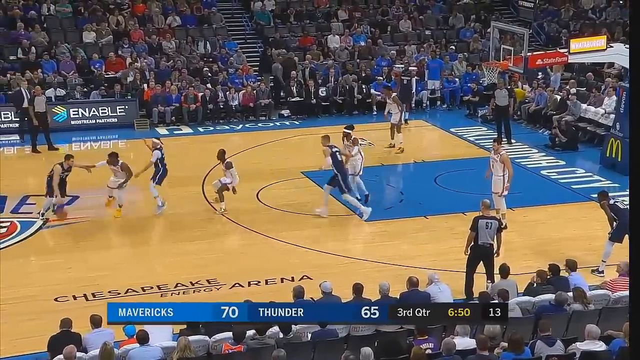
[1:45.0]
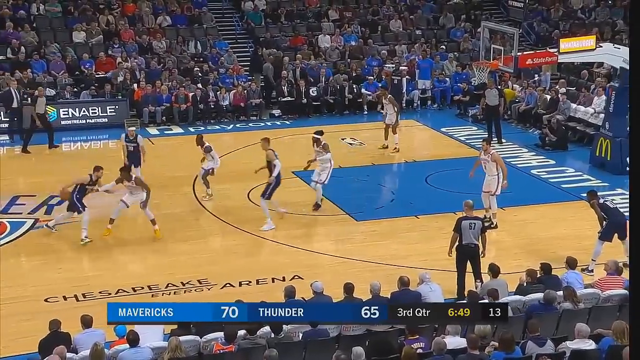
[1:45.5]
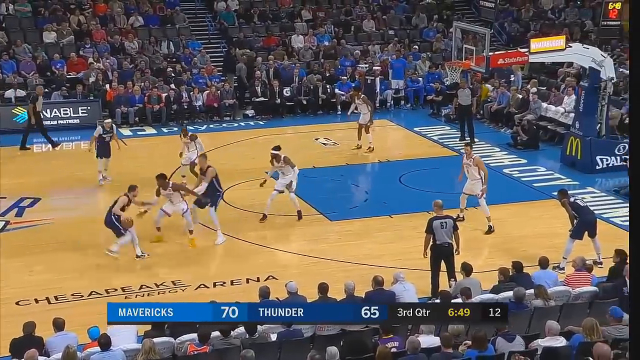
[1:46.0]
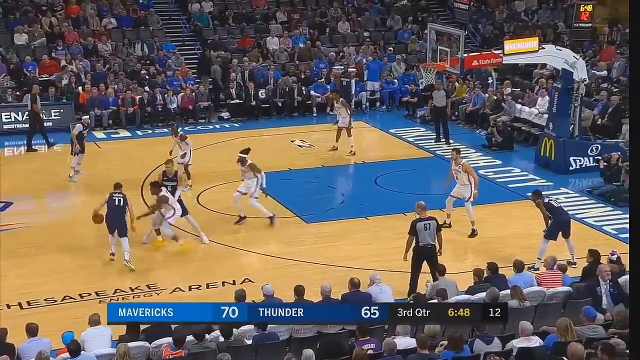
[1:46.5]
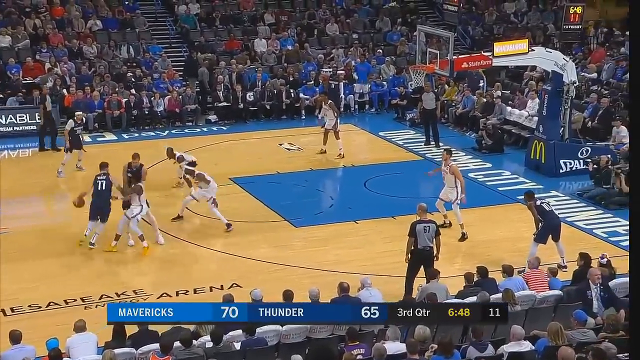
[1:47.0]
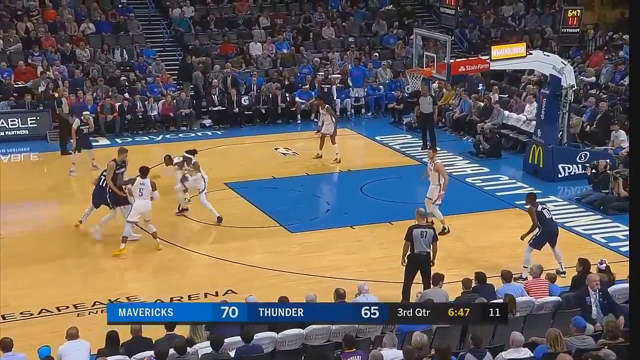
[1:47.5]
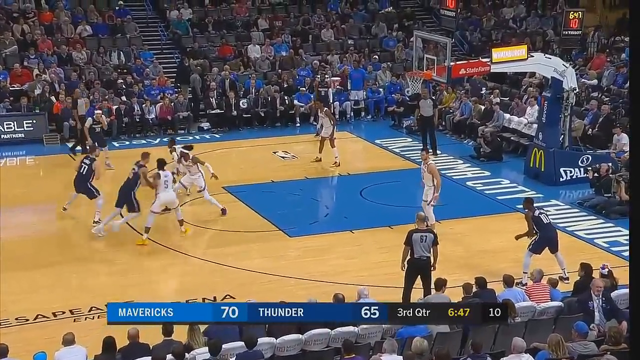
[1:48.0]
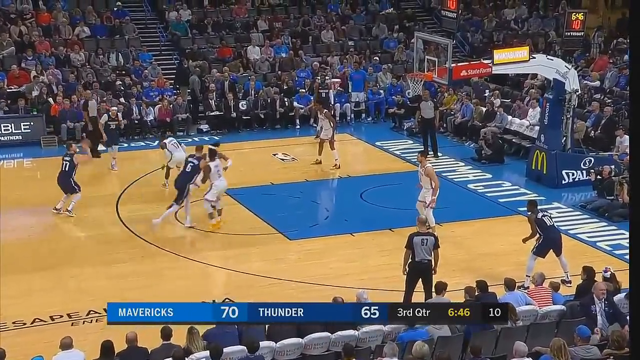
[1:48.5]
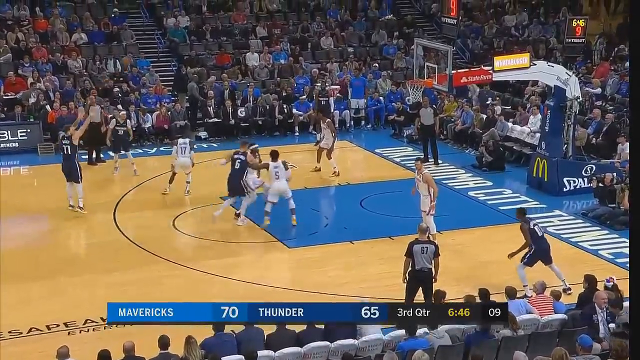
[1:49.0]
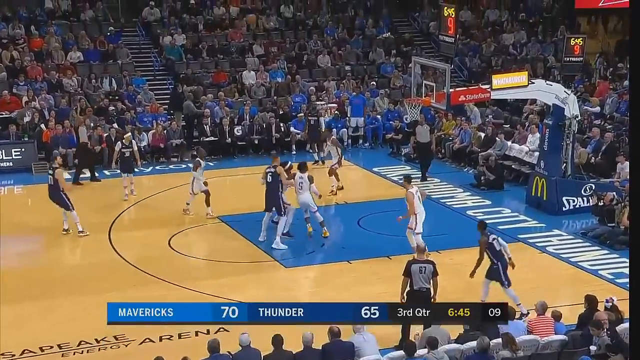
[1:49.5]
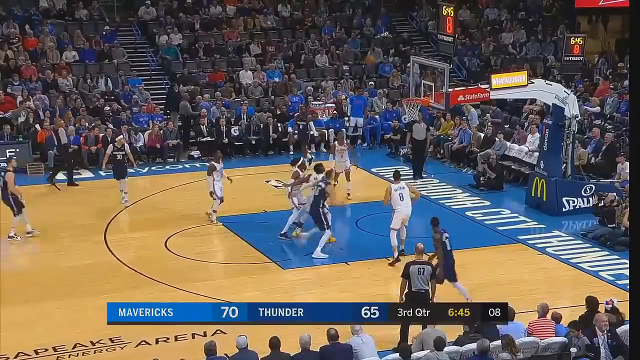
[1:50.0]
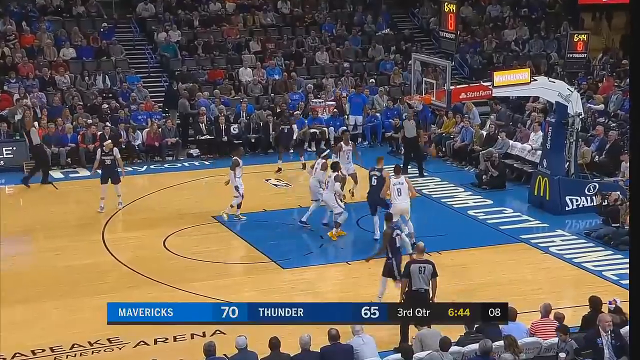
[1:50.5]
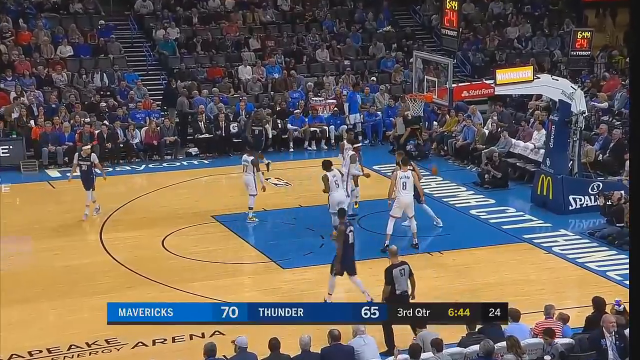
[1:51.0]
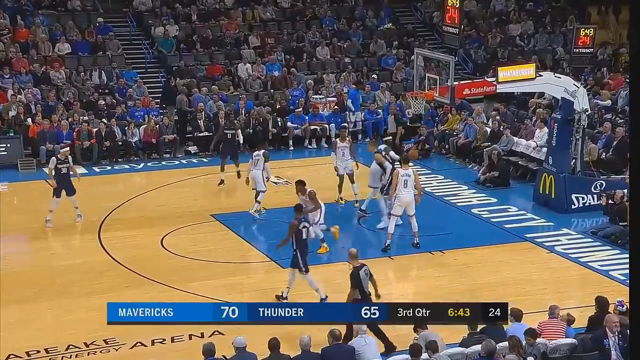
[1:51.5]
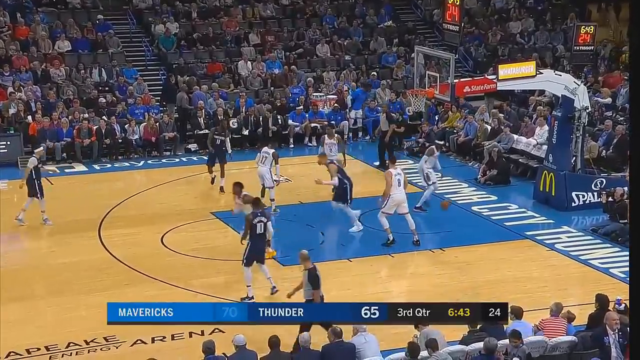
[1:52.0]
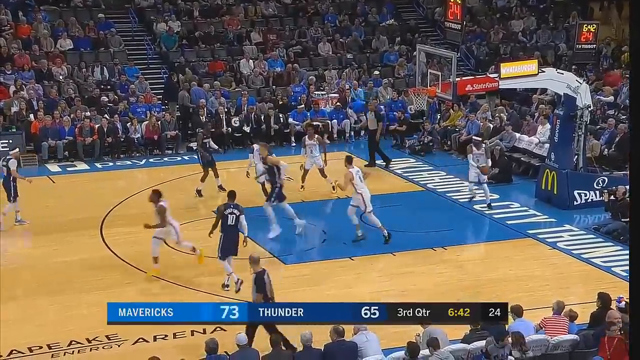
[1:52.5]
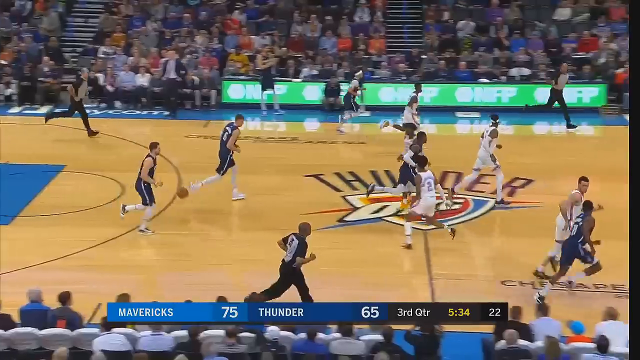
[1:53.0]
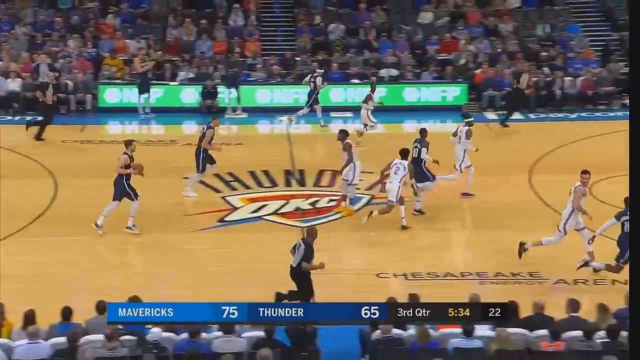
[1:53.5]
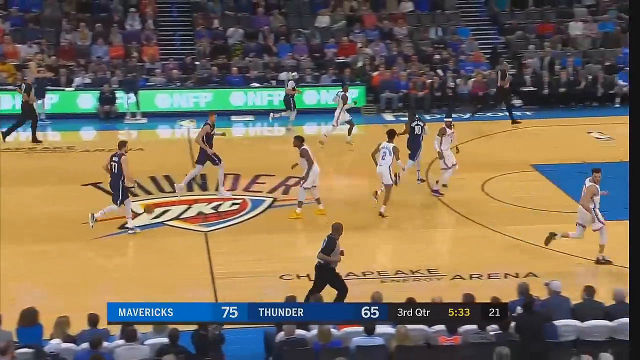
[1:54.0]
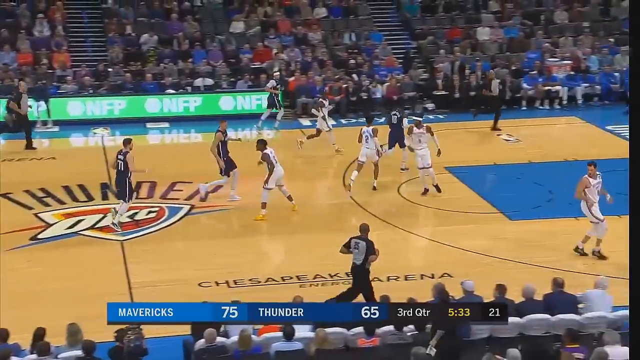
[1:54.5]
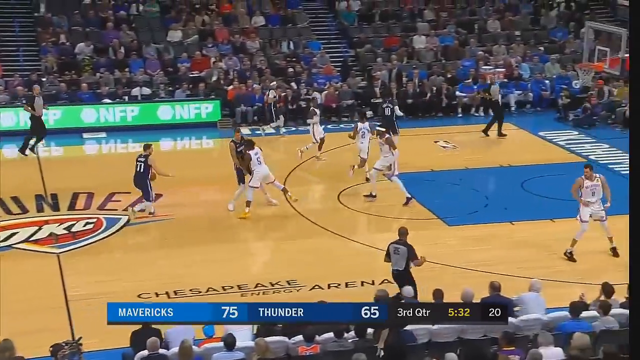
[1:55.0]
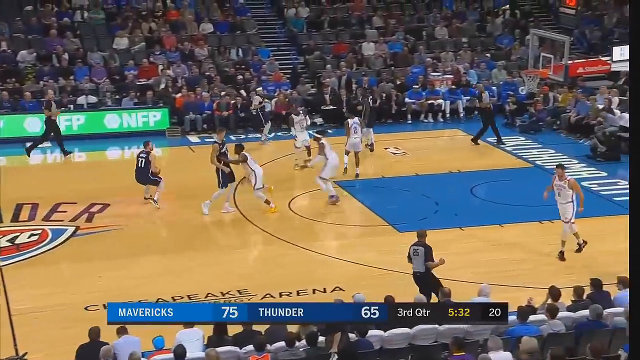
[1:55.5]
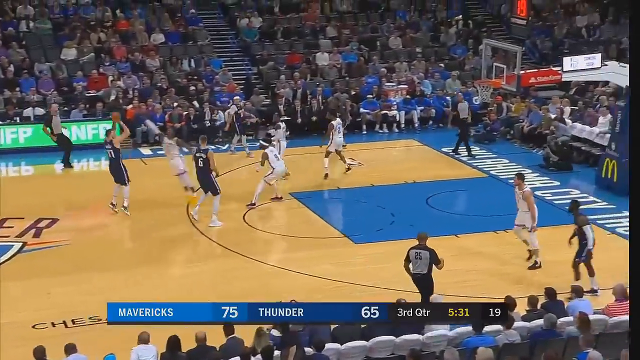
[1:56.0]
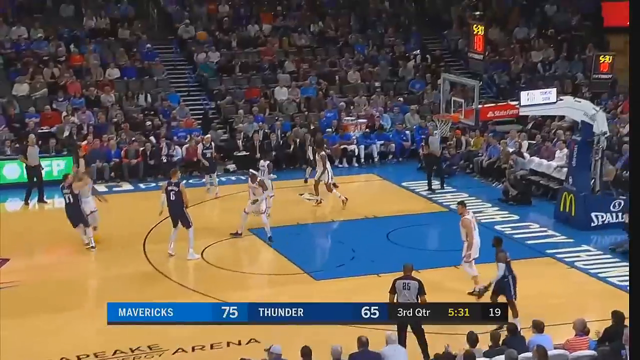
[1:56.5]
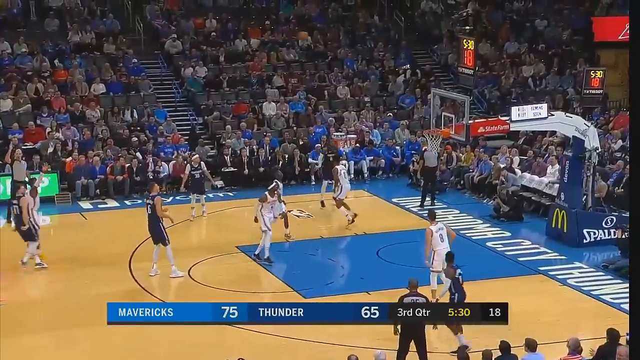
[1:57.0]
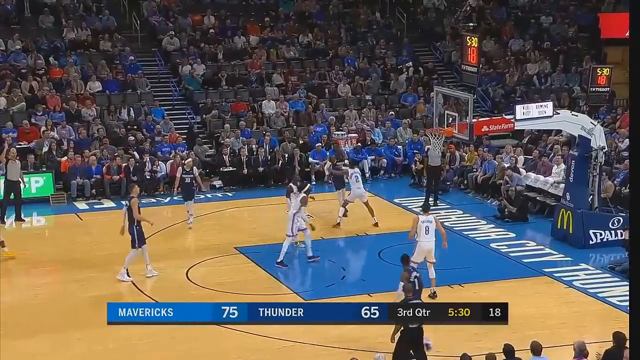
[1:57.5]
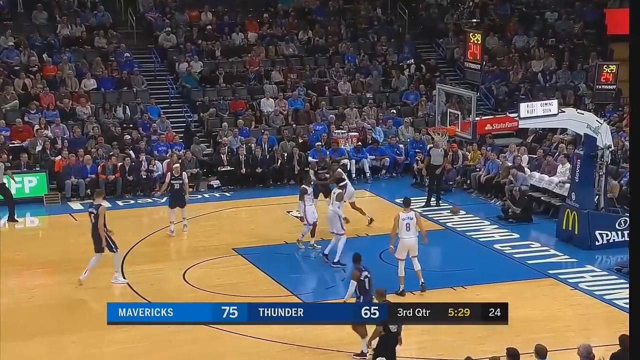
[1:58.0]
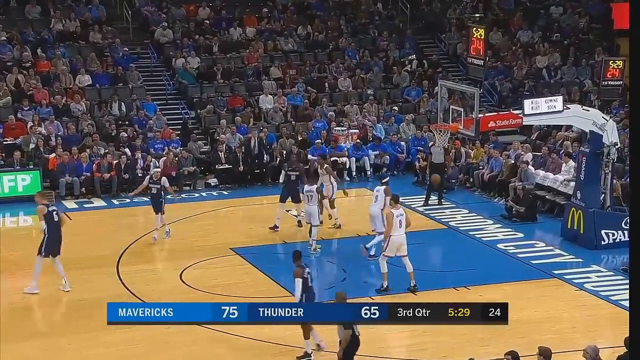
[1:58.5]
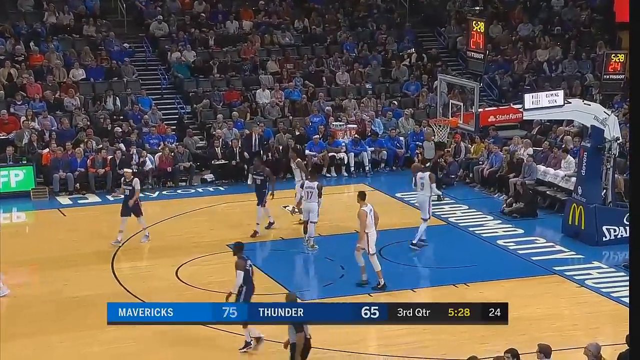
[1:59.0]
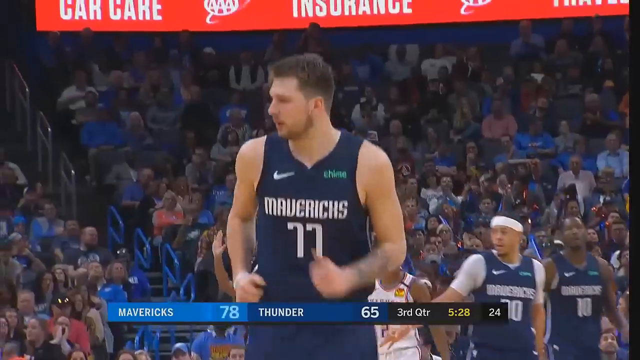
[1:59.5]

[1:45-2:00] Doncic dribbles, dribbles behind his back, pulls up beyond the three-point line and sinks another basket, bringing the score to 73-65. He then makes another three-point shot from well beyond the line, bringing the score to 78-65 in the third quarter with 5:28 left. At one point there appear to be close to three people trying to guard him, between him and the center for the Dallas Mavericks. There is not a lot of clapping in the crowd; a few people acknowledge a basket Doncic makes, but the crowd is rather subdued. Apart from a couple of players trying to guard Doncic, the Oklahoma City players don't seem to move much at all.